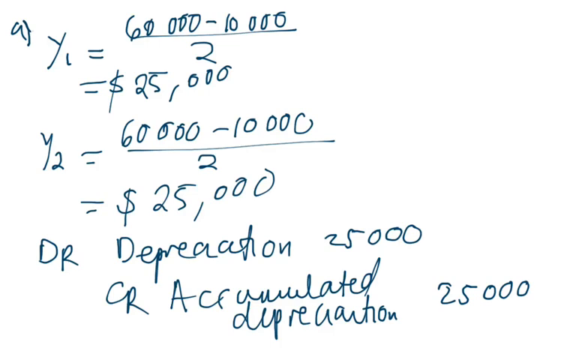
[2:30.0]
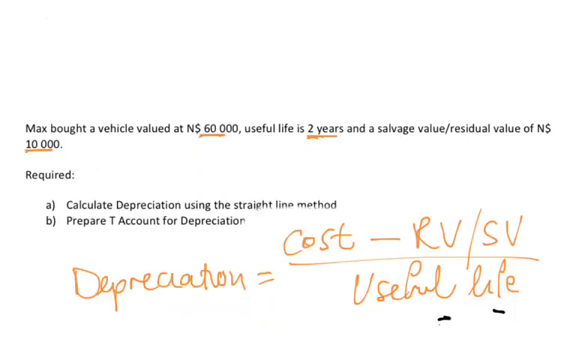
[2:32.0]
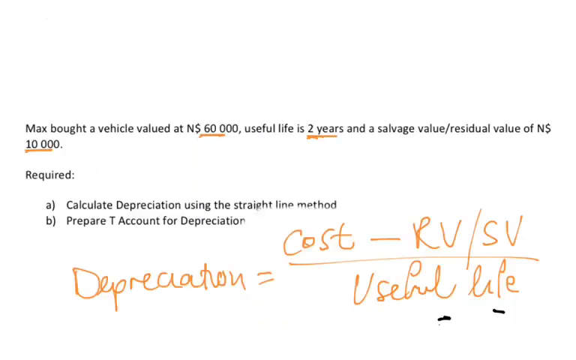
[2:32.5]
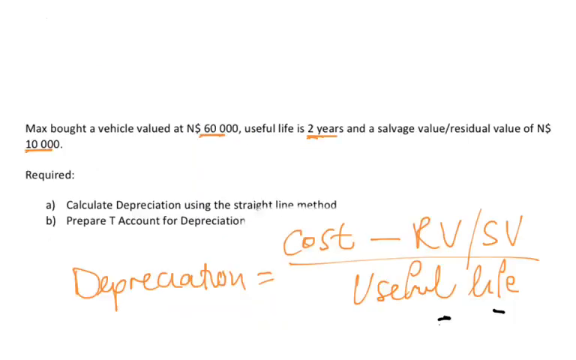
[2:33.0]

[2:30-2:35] Various calculations are shown in front of a white background, from top to bottom: "Y1 = $60,000 - $10,000 over 2", "= $25,000", "Y2 = $60,000 - $10,000 over 2", "= $25,000", "DR depreciation $25,000", and "DR accumulated depreciation $25,000". All of it is written in blue ink and is hastily written and messy. The scene then transitions to the slide with the word problem, which says "Max bought a vehicle valued at N$60,000, useful for two years and a salvage value/residual value of N$10,000."